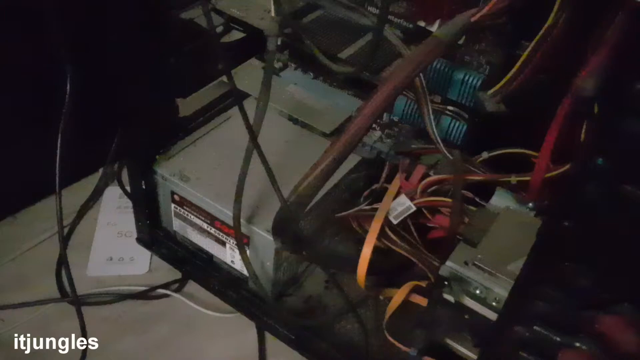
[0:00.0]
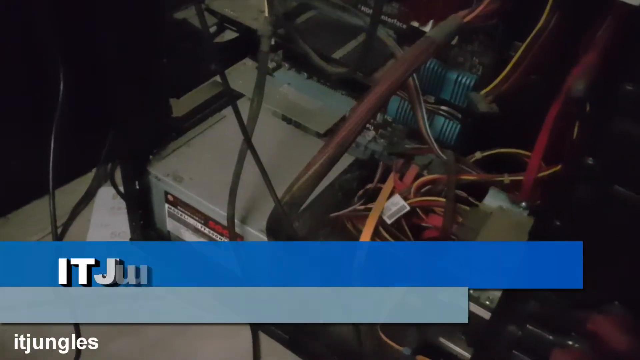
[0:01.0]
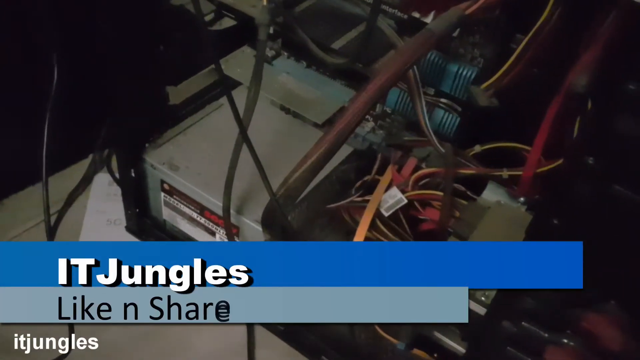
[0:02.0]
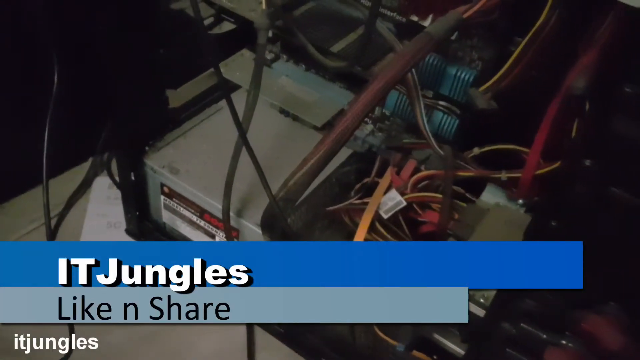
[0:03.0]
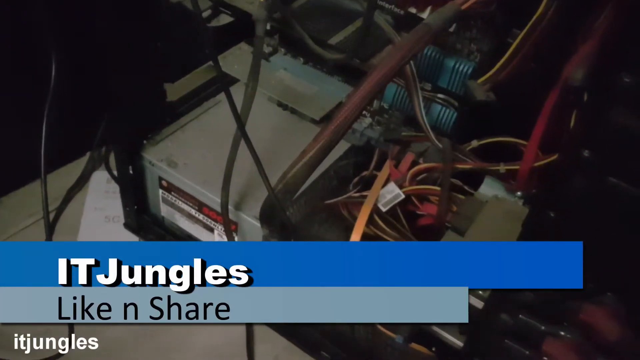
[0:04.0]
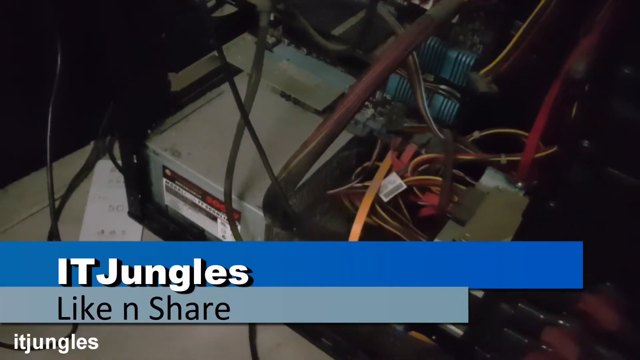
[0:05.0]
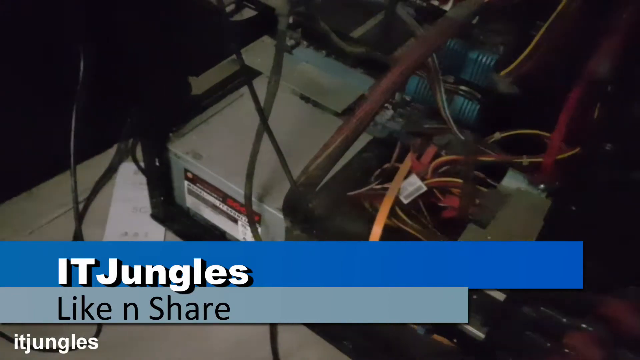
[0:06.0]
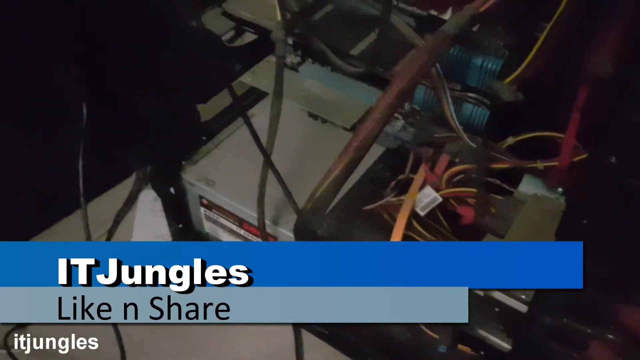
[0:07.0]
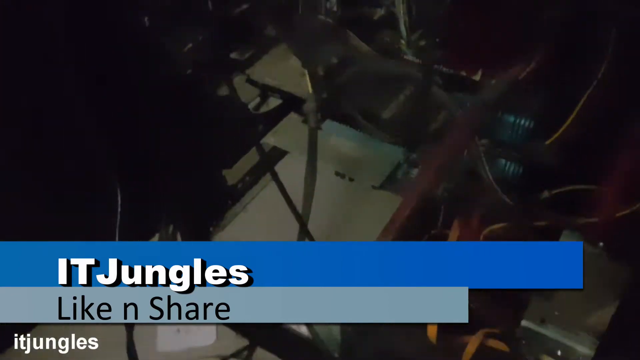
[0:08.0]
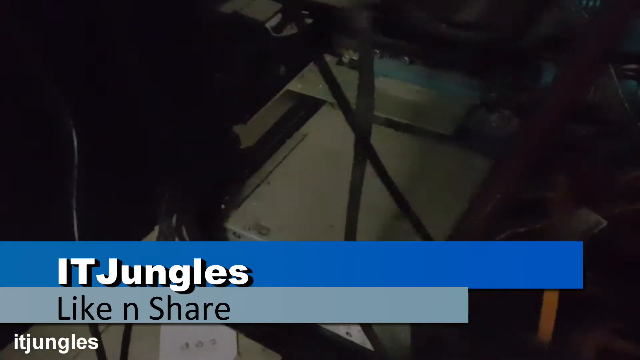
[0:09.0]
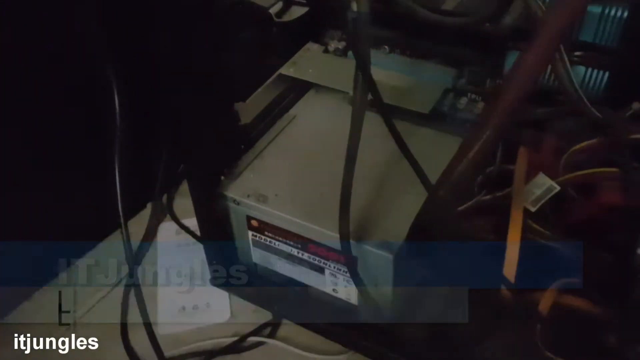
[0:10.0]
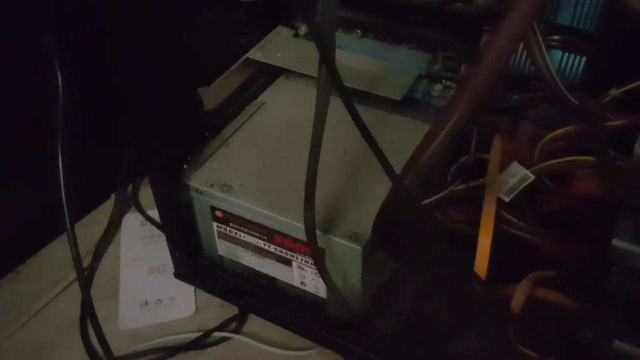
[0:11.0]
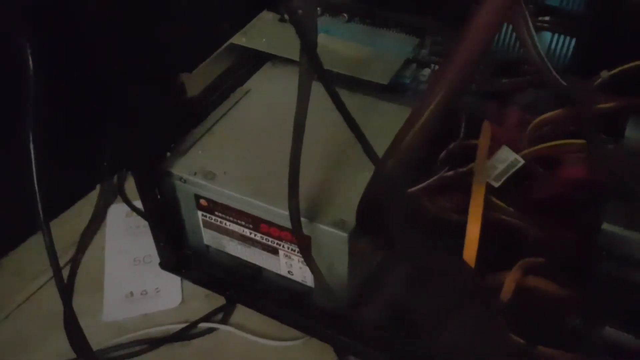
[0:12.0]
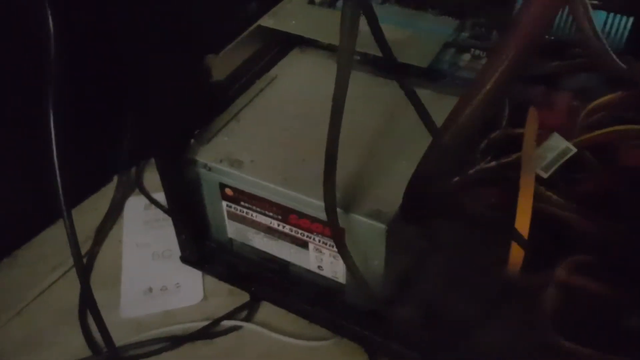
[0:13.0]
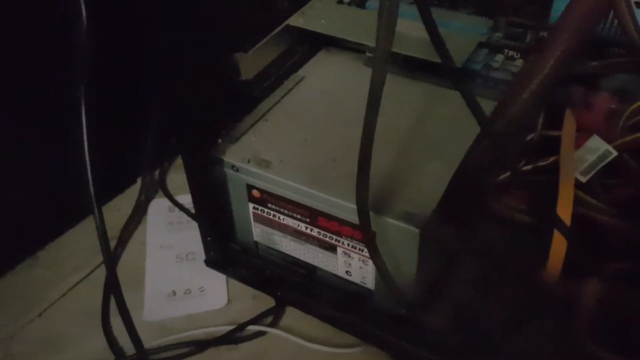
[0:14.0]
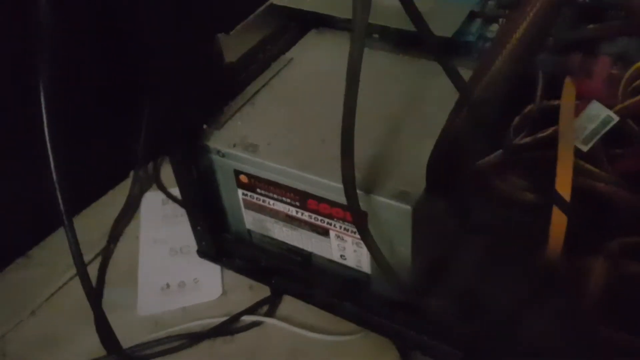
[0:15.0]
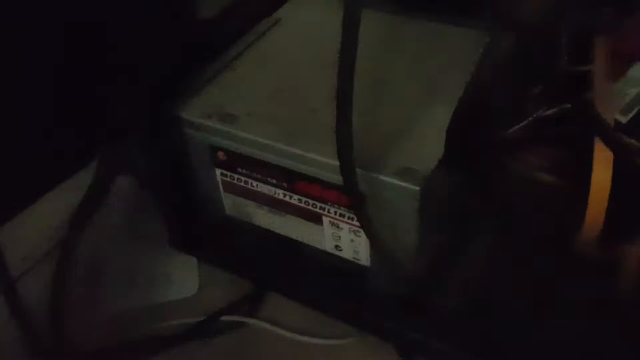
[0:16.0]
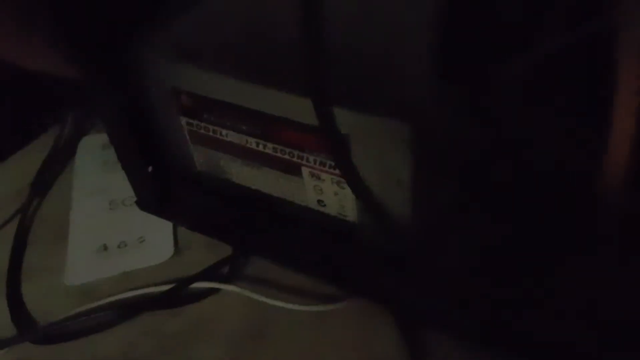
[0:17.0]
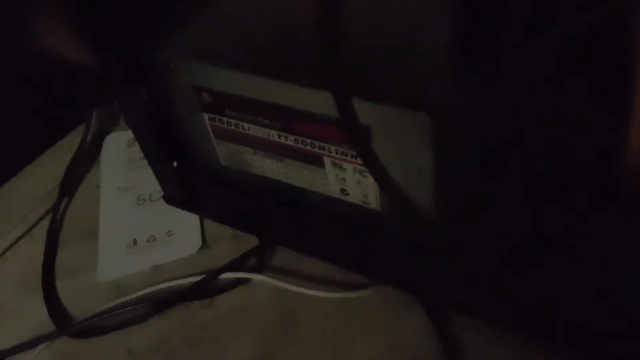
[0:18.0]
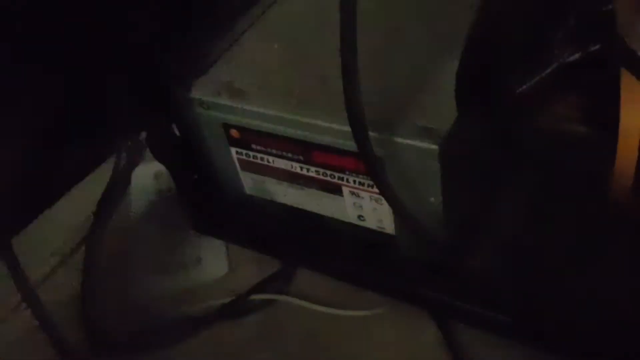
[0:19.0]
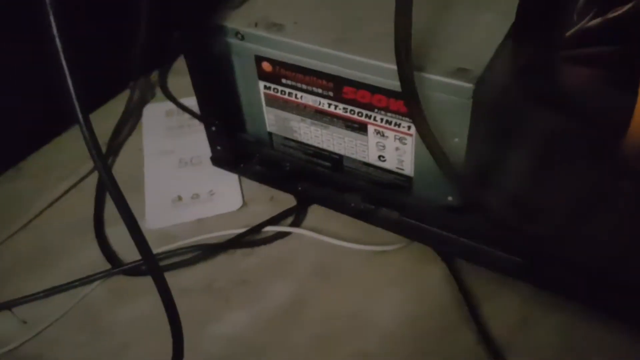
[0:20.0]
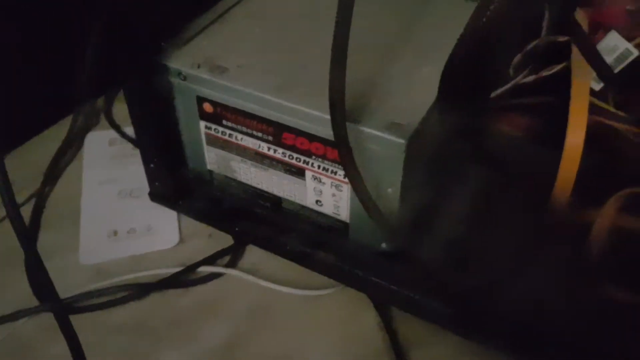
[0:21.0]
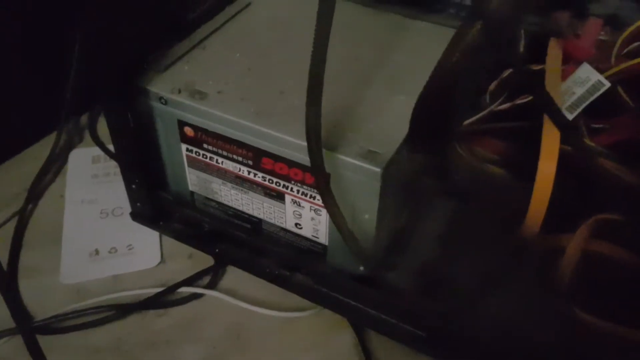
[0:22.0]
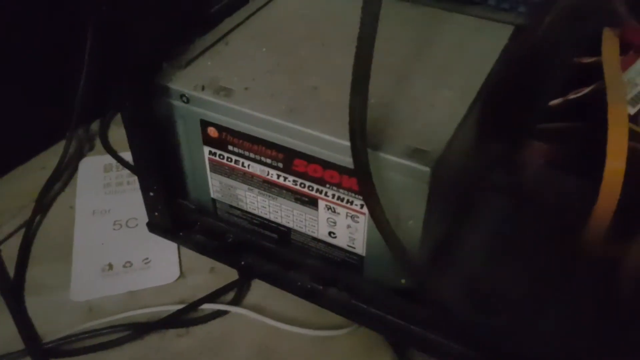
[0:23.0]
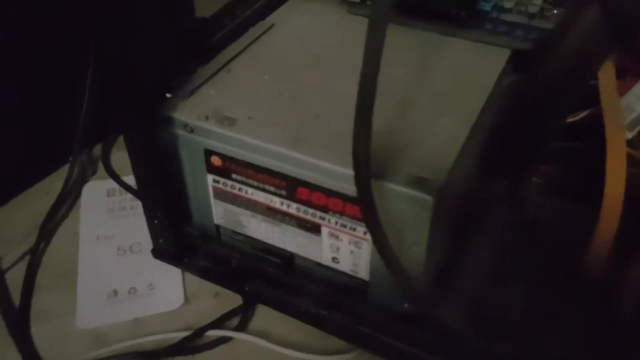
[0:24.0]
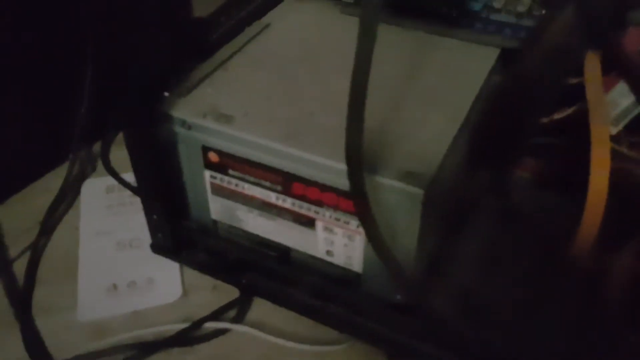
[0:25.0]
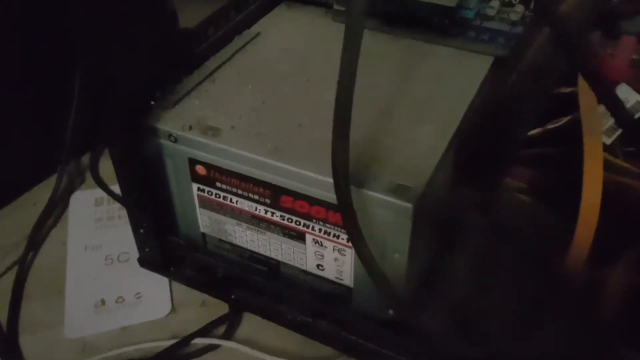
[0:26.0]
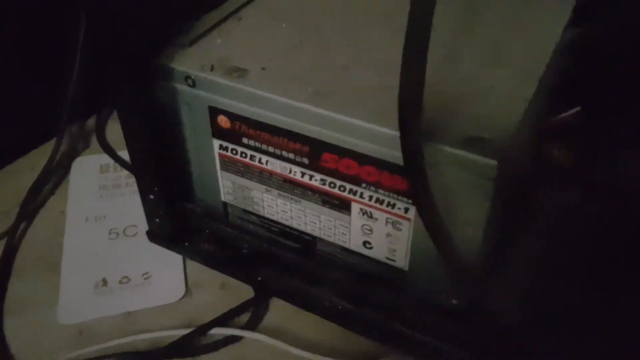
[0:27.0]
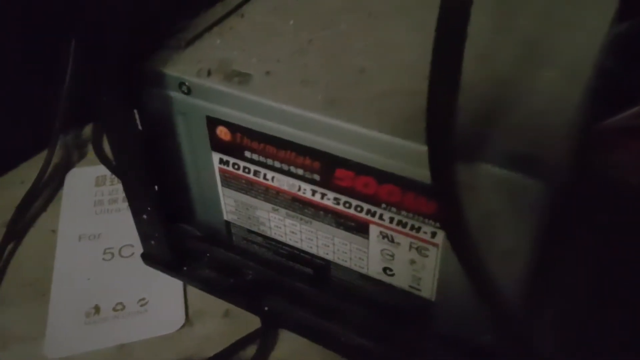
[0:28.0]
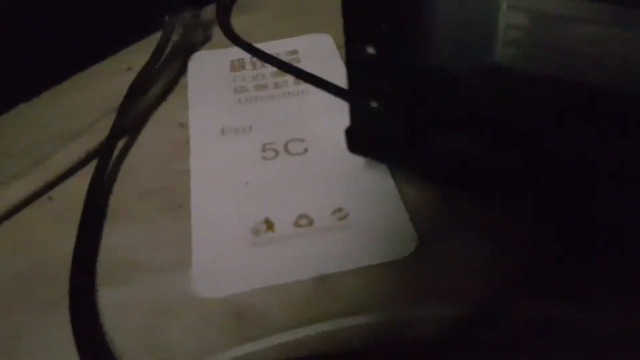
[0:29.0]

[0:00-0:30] On-screen text reads "IT jungles, like and share." A large number of IT cords run back and forth, looking very confusing, attached to some type of computer hardware. Something is written on the front of the hardware but is too small to read as the camera zooms in hard. Some cords are plugged in and some are not. Once the camera is close enough, the text shows "model li", then a blacked-out portion, then "tt-500 ml 1 mm-1" as the model of the device. The cords are a complete mess: red, orange, green and gray cords, plus one really big, wide cord, and it is unclear whether everything is plugged in.